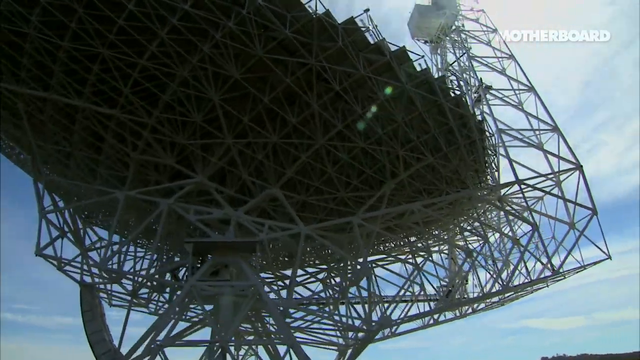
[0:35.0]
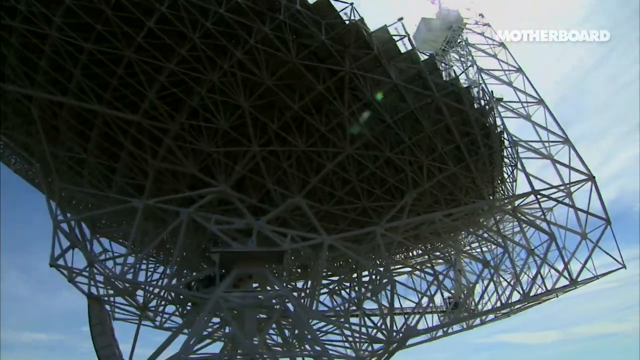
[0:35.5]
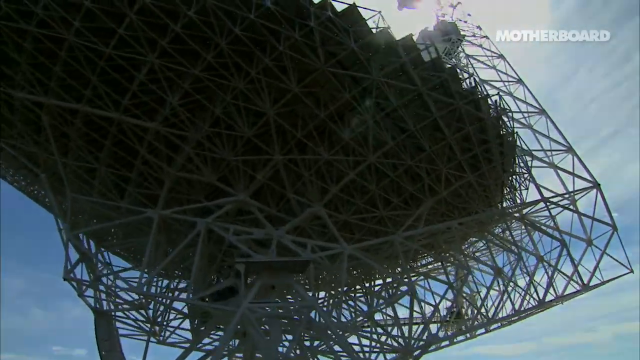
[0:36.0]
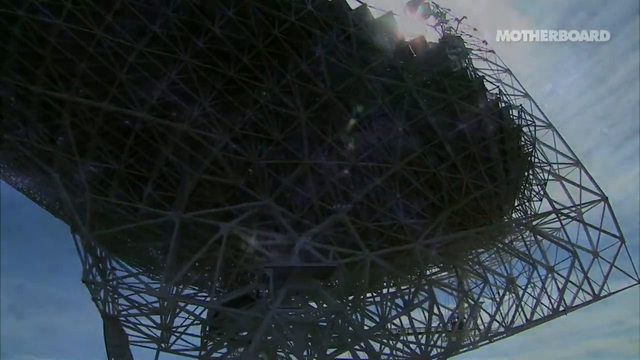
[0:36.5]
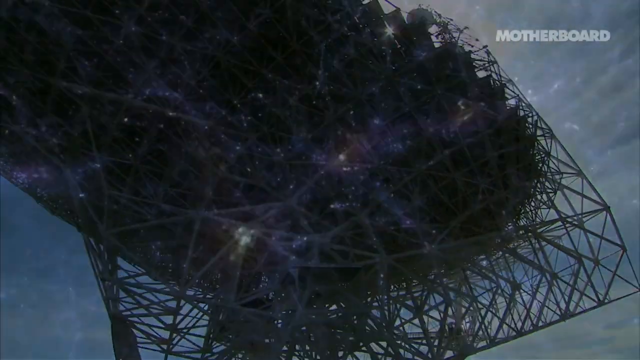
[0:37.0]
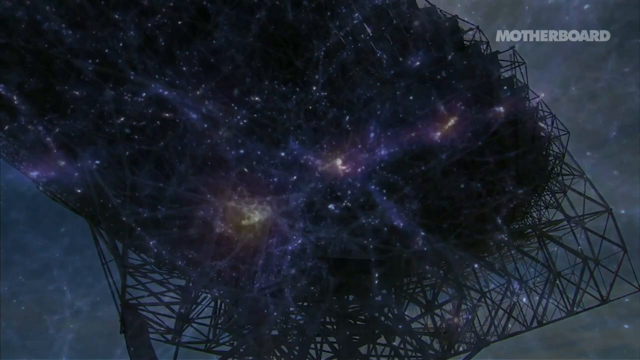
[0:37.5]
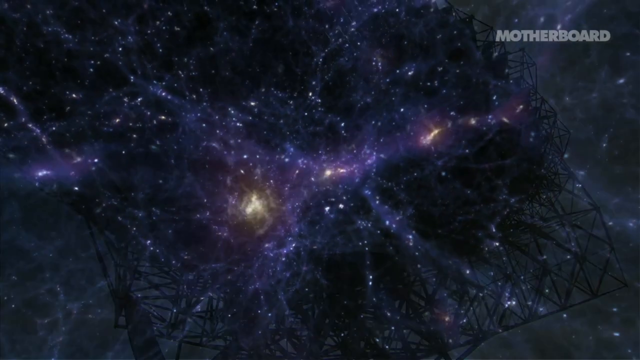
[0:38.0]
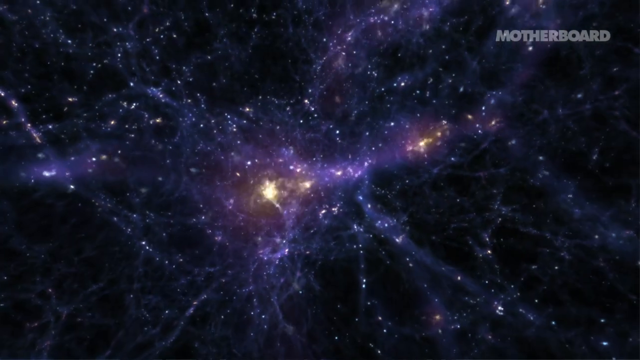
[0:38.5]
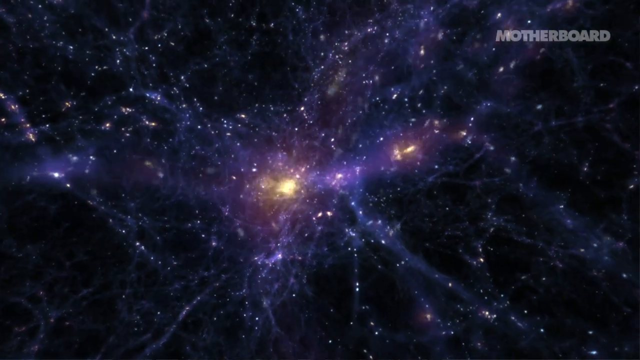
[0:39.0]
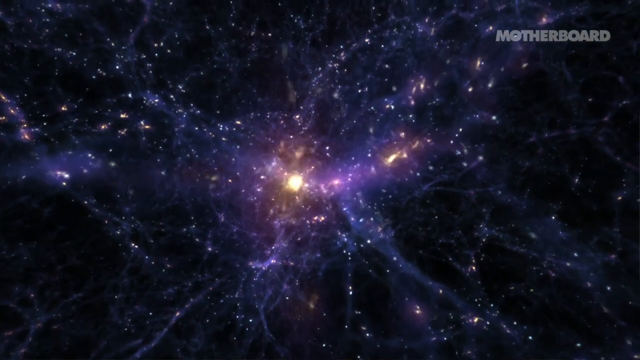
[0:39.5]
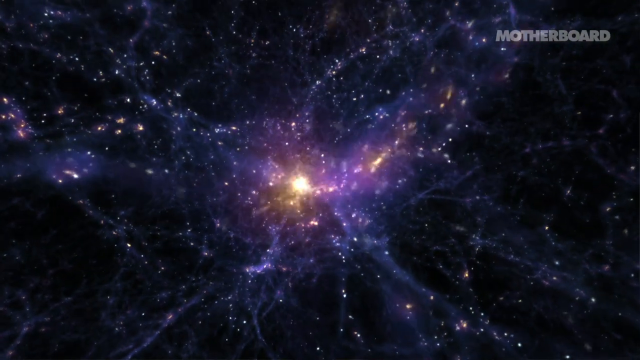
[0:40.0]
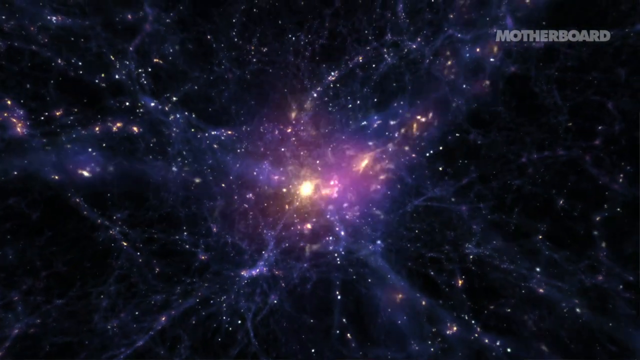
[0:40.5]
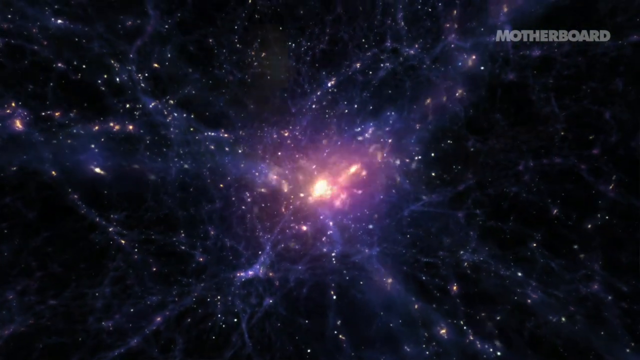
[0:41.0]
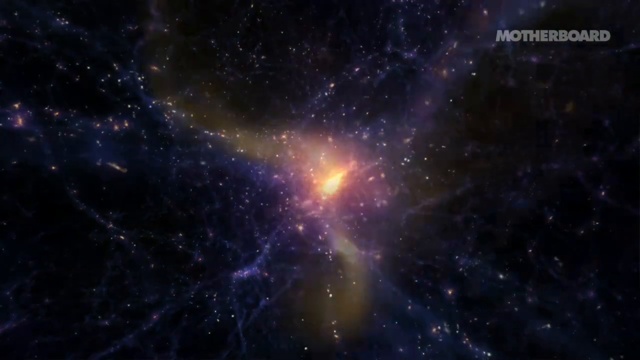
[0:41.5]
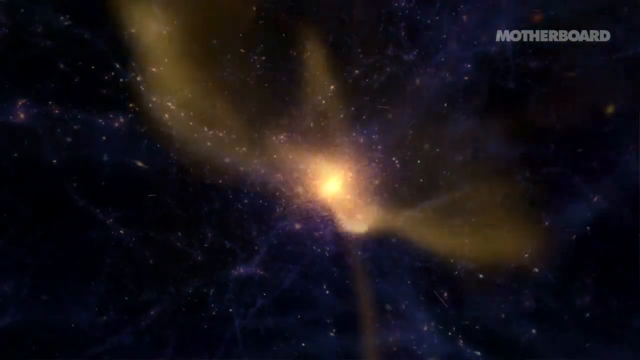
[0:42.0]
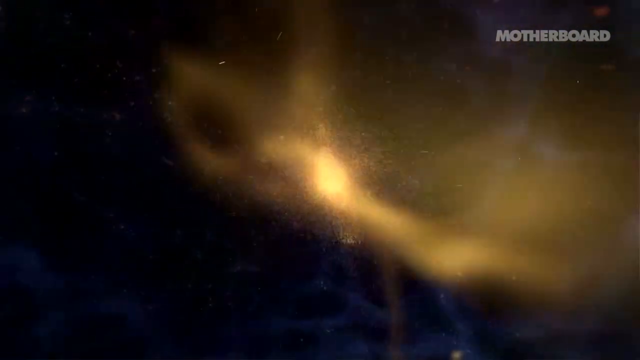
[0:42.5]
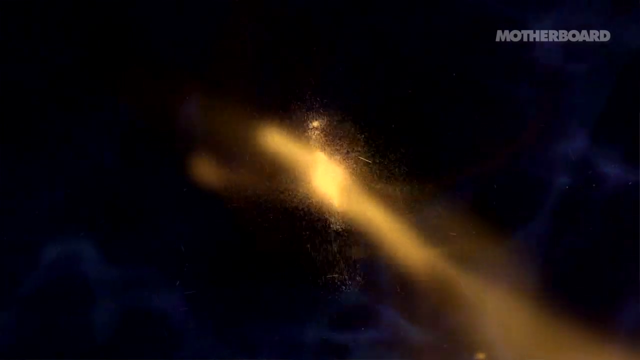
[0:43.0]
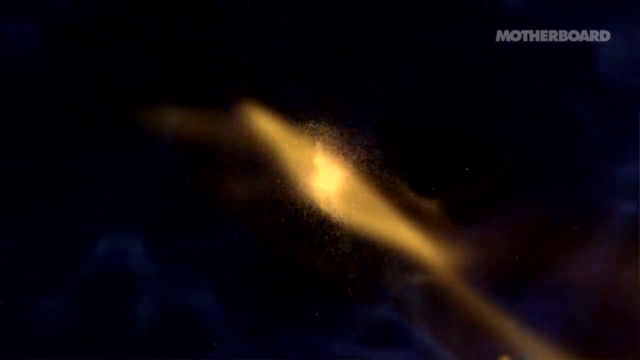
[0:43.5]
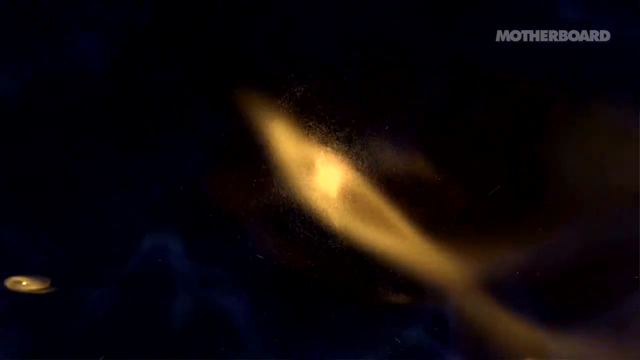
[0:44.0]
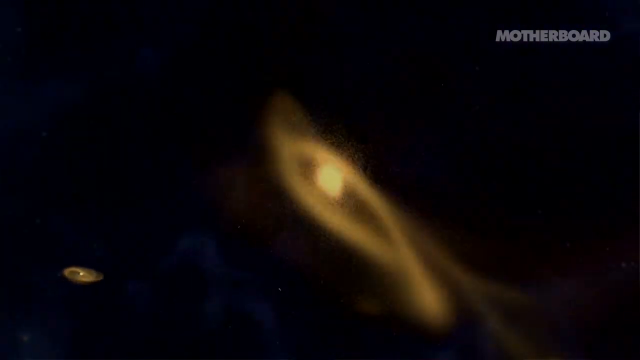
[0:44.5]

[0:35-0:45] The large terrestrial satellite dish is shown, followed by what looks like a spinning galaxy against a deep black background with lots of white and purple stars. A large circular mass in the middle spins around; it has what looks like a ring of gas around it and seems to be giving off some sort of flares, like solar flares from the sun. The spinning galaxy image repeats along with the image of the large Earth-bound satellite dish, which is round, spherical in shape, very massive and tall, with two antennas pointing upward toward the sky. The word "Motherboard" is written in white in the upper right corner.